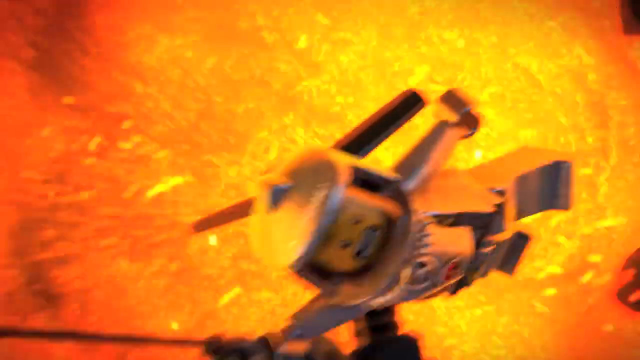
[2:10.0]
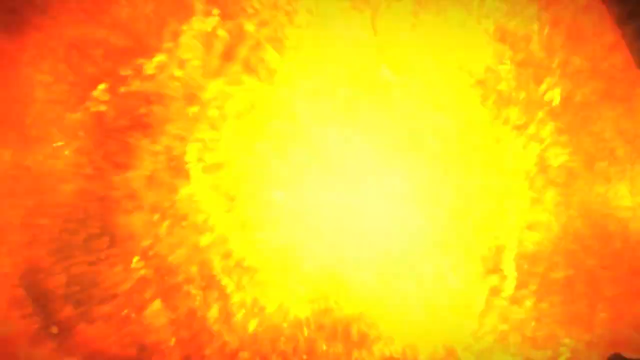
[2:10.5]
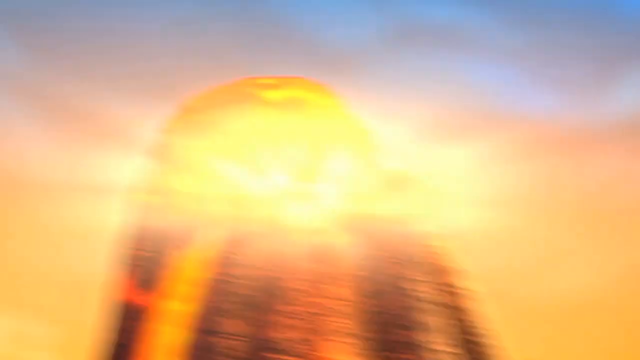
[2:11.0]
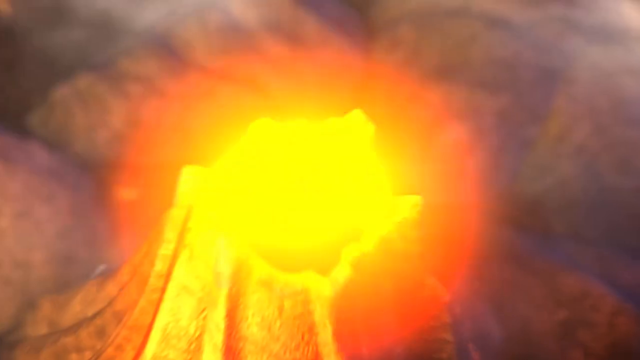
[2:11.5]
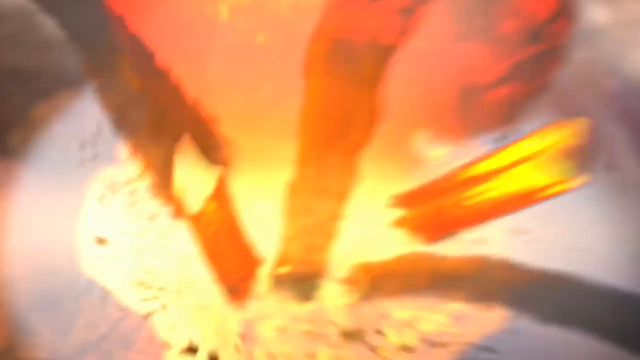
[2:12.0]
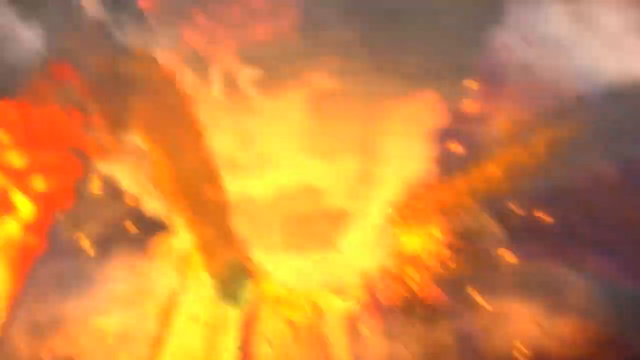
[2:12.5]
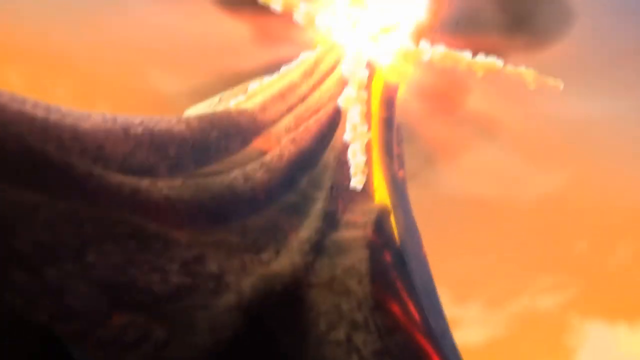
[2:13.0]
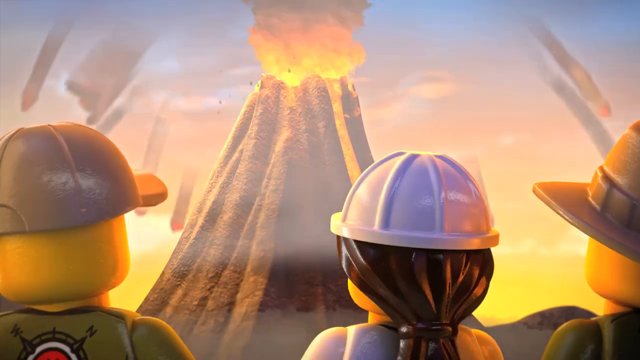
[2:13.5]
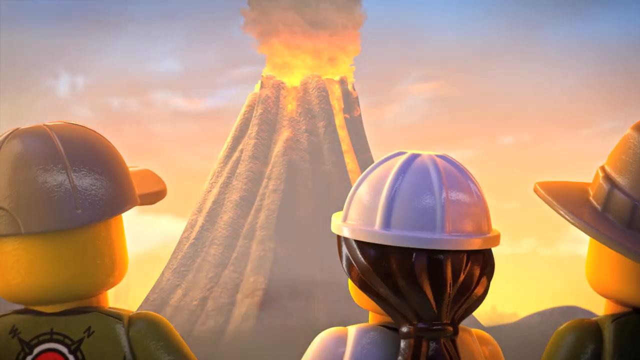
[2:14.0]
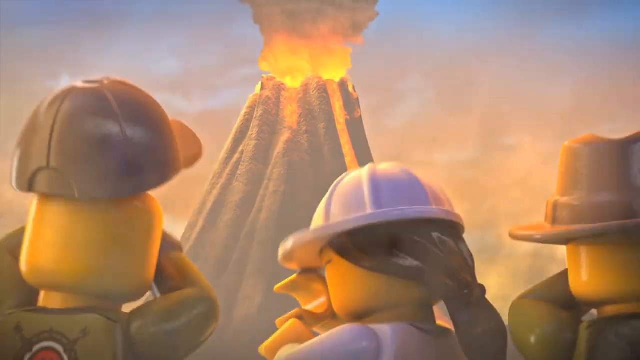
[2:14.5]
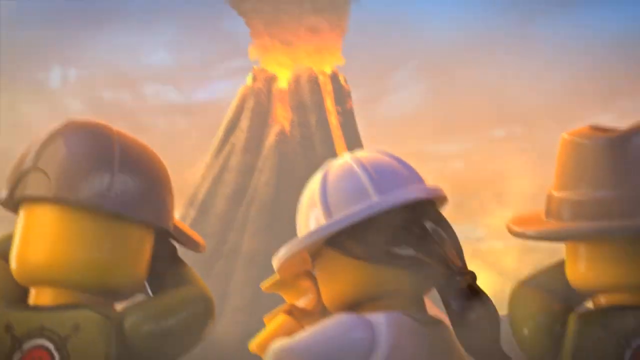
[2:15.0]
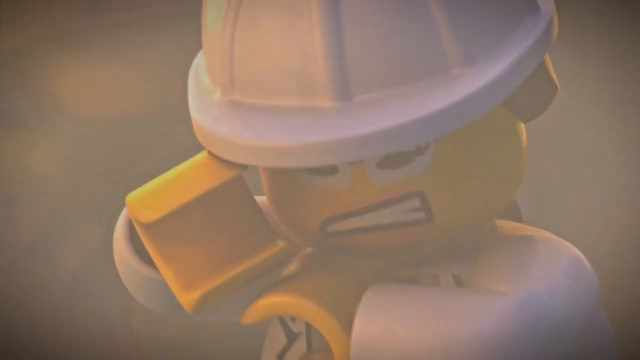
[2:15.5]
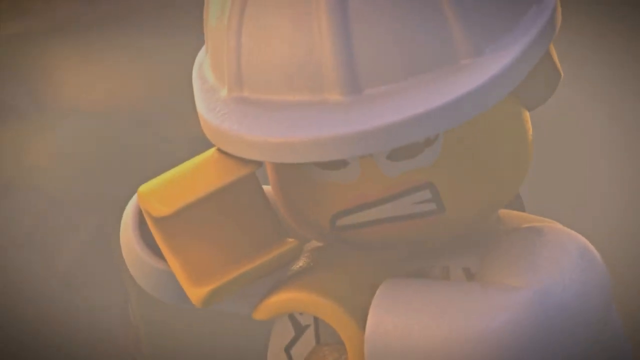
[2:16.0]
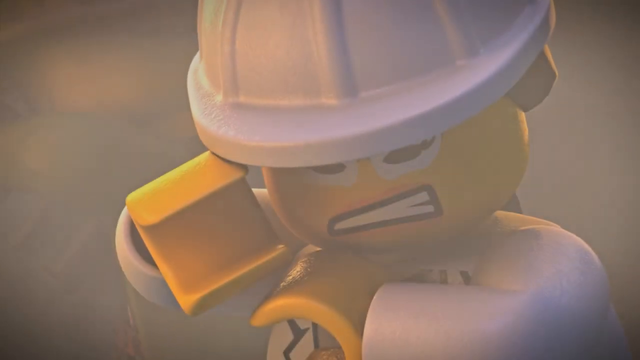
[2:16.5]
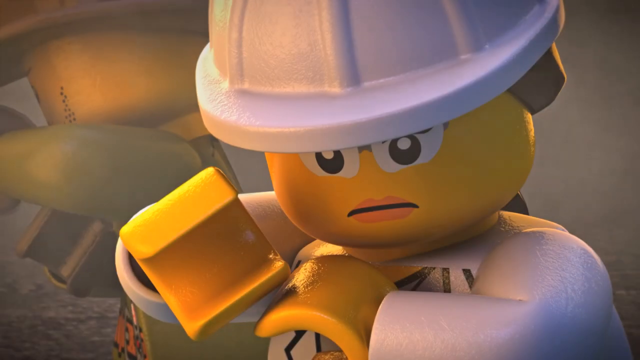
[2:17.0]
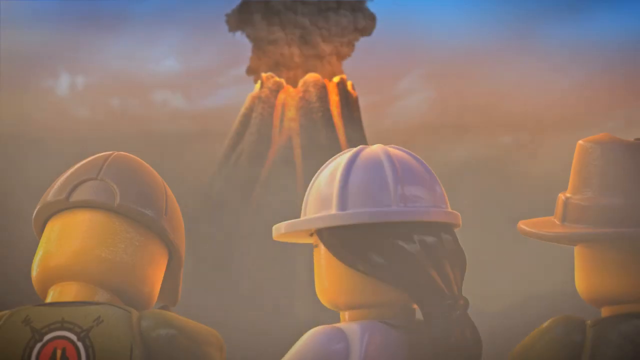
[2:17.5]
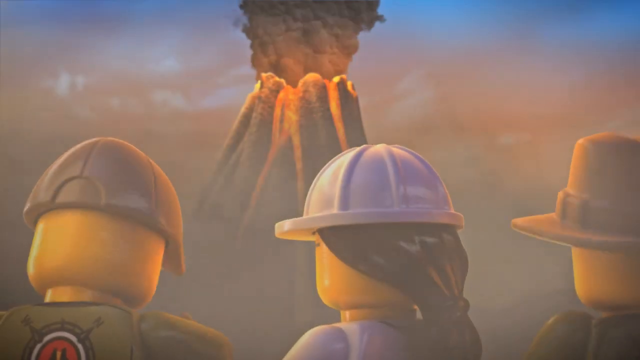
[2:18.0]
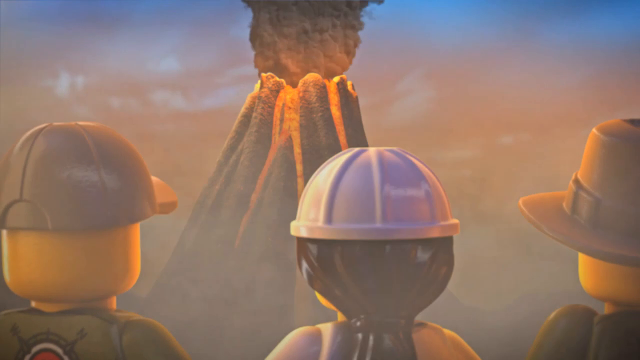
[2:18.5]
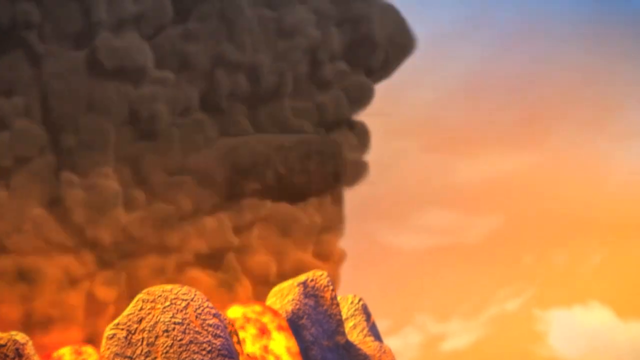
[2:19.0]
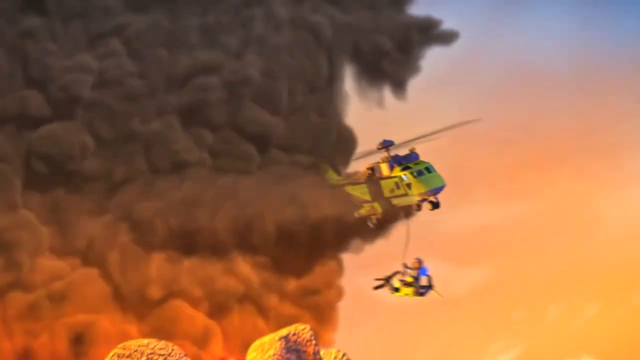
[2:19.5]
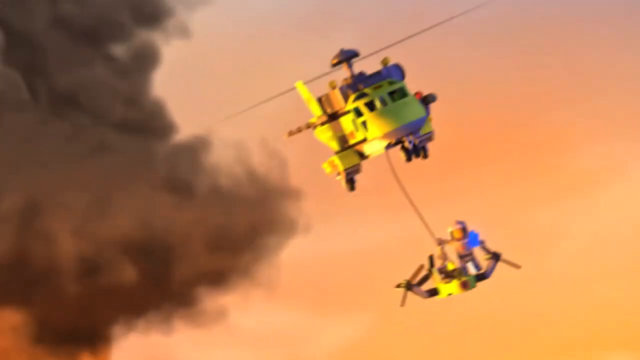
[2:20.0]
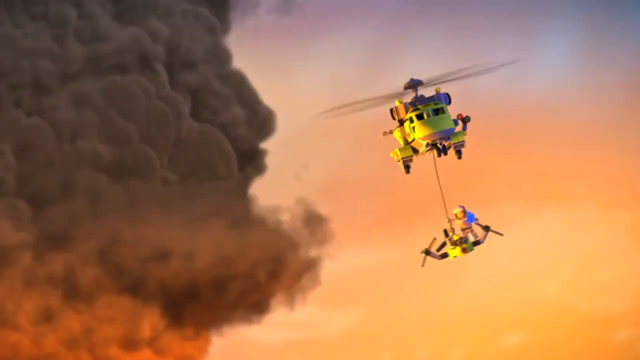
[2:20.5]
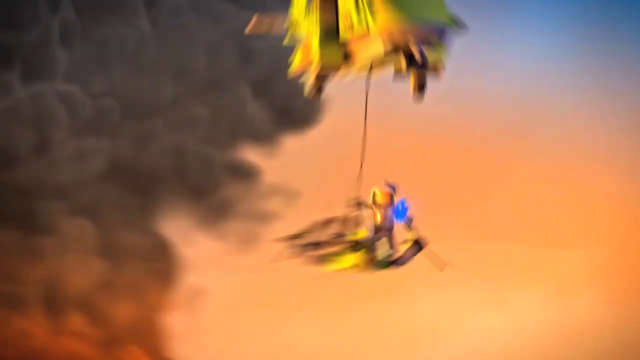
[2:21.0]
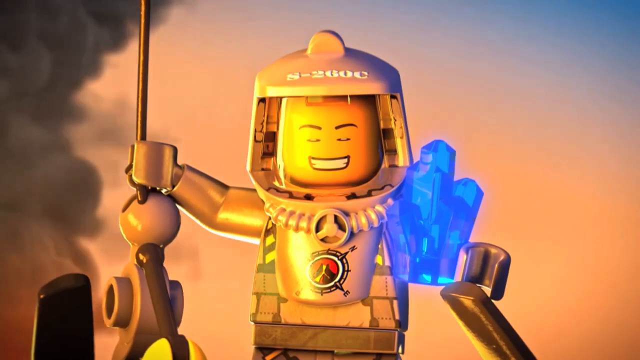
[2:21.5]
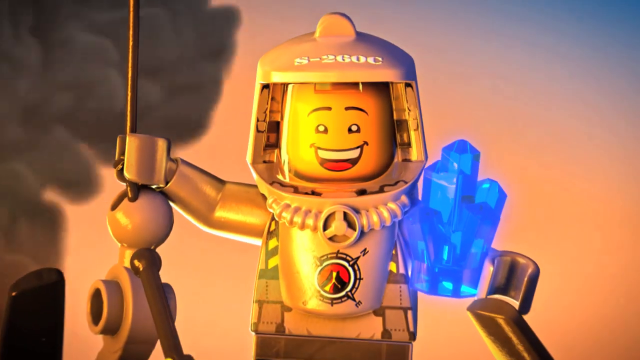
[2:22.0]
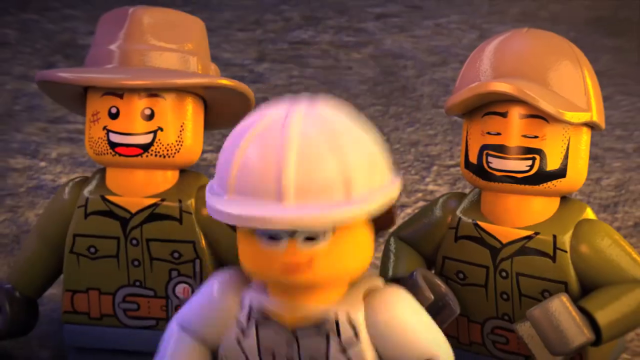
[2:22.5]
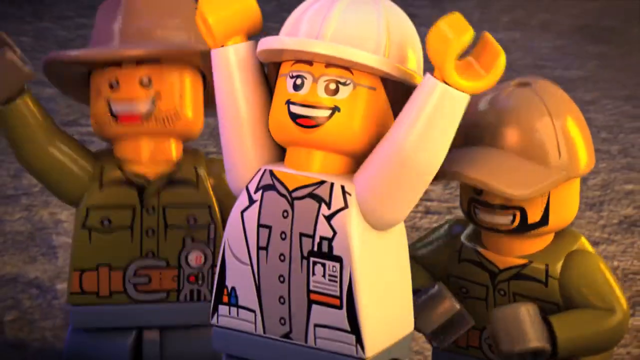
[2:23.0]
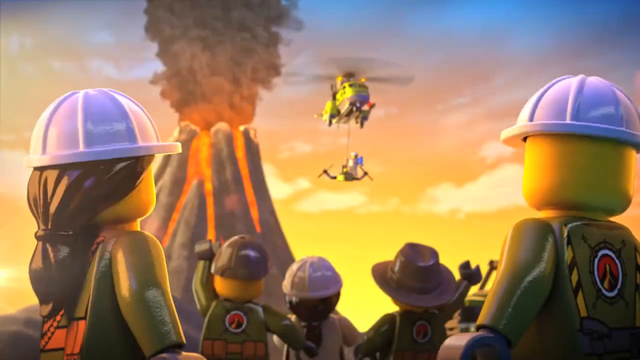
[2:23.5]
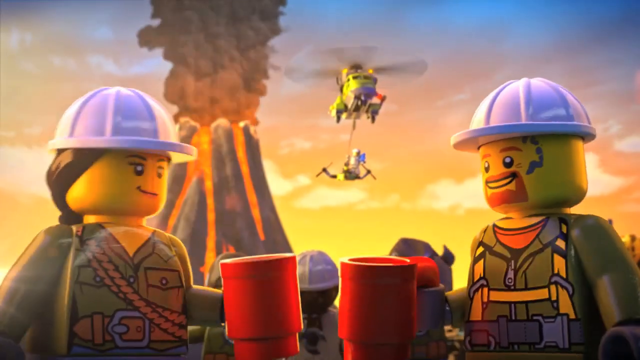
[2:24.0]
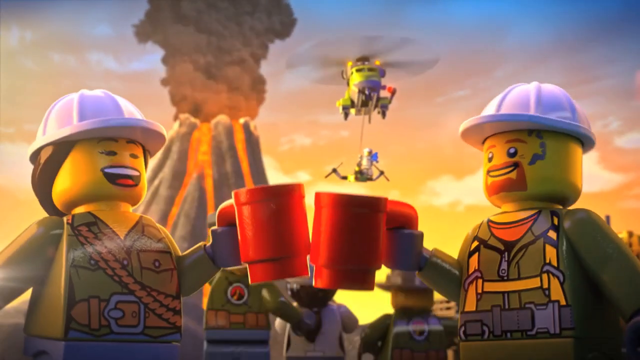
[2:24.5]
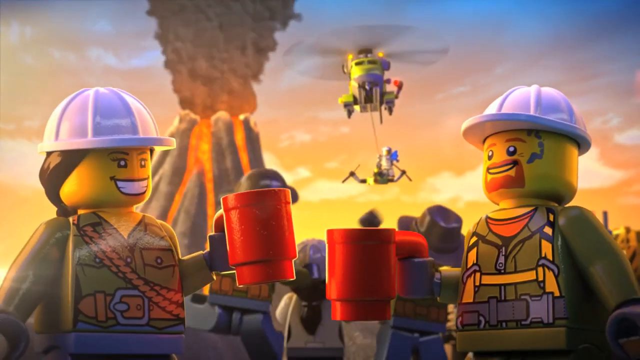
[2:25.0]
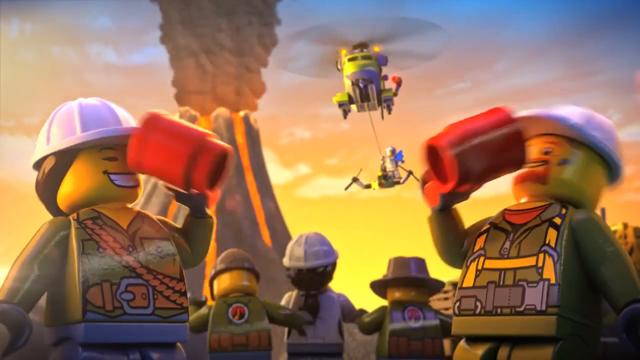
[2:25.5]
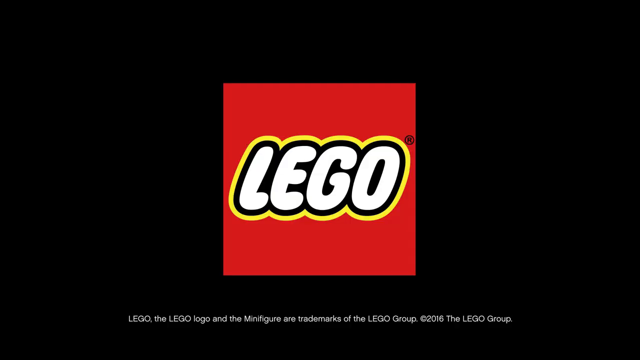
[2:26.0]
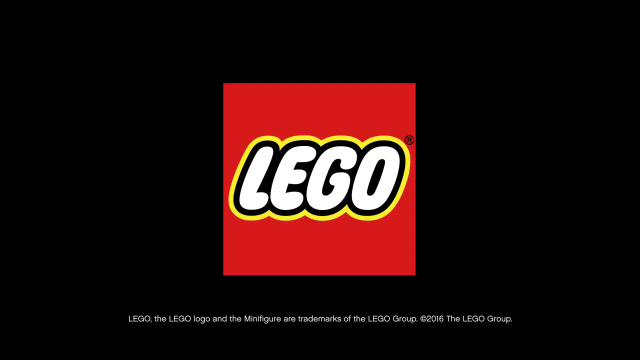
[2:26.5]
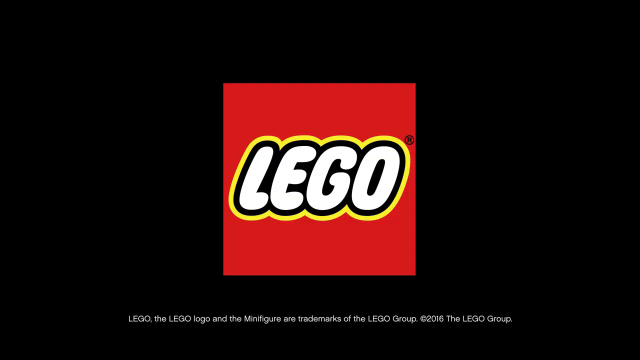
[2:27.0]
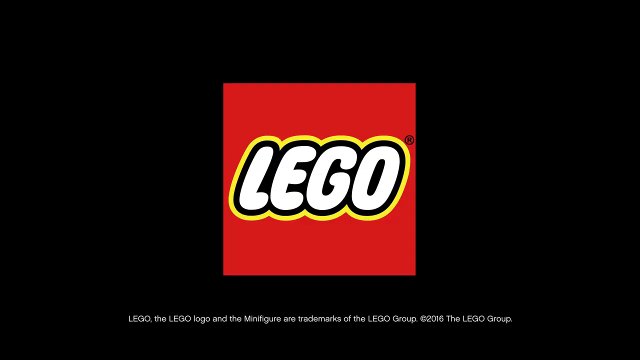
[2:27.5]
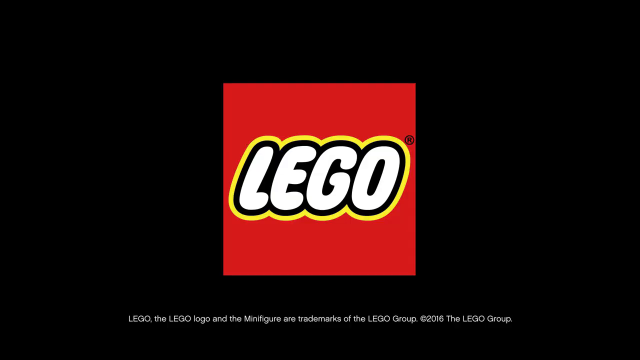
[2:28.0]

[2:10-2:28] The helicopter tries to escape the volcano explosion. The volcano explodes magnificently, and the scene cuts to the engineering people on the ground, who hold their hands up over their faces to protect themselves. They are visibly very worried, as it doesn't look like the others made it out of the top before the volcano exploded. The helicopter then appears from behind the ash cloud, and a little Lego man rides on top of the drone being towed by the helicopter. He is very excited and happy, holding up the crystal he saved from the floor of the volcano. The people on the ground jump for joy and toast one another.